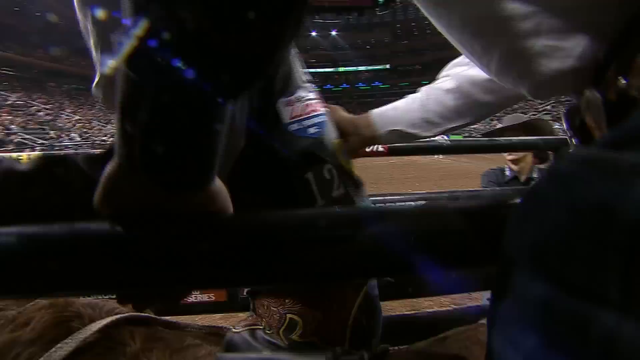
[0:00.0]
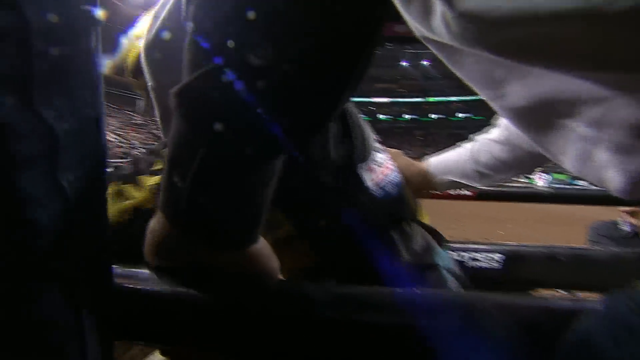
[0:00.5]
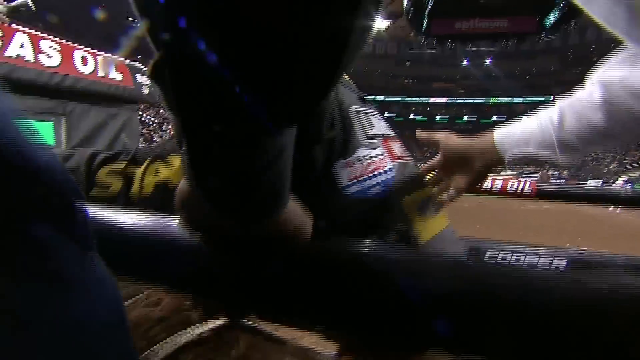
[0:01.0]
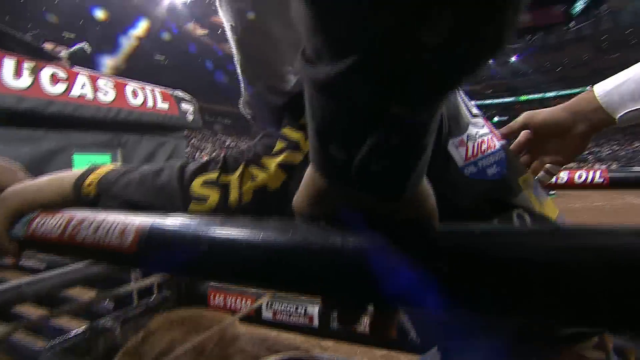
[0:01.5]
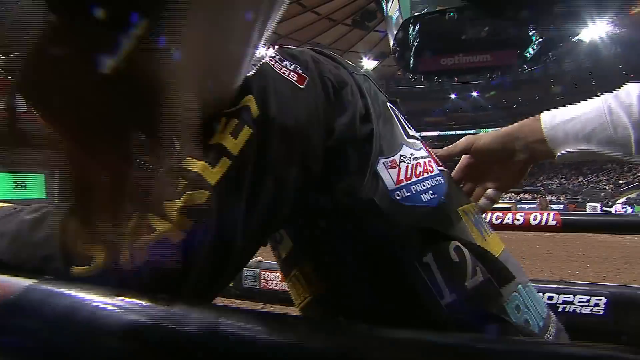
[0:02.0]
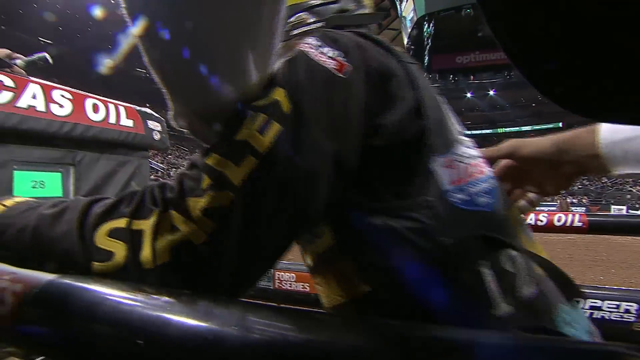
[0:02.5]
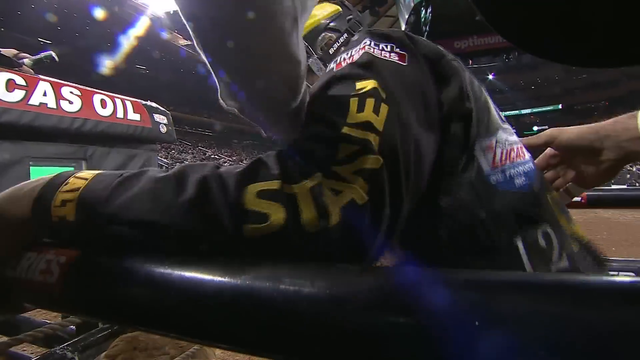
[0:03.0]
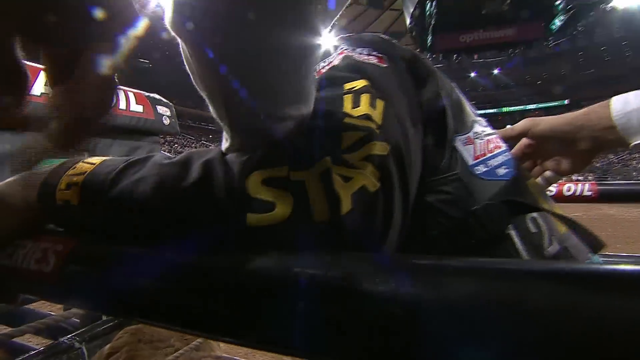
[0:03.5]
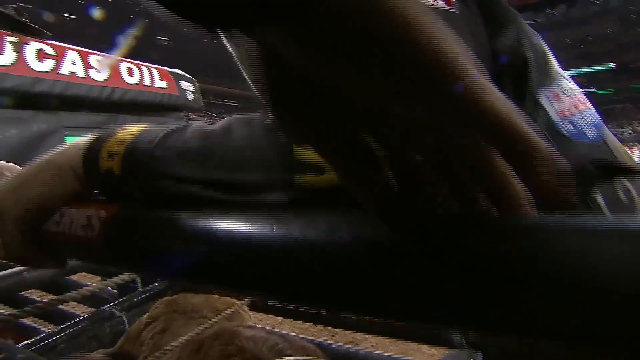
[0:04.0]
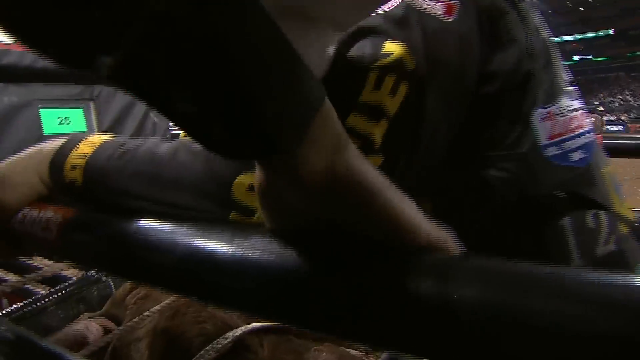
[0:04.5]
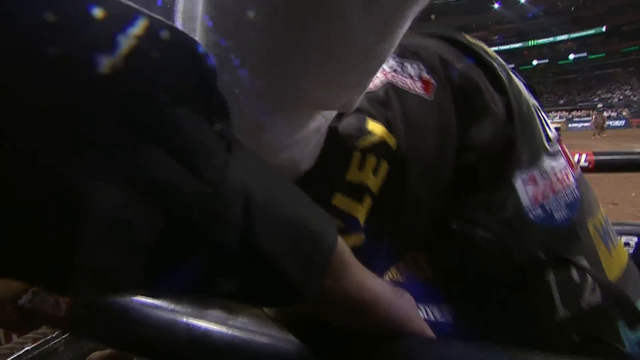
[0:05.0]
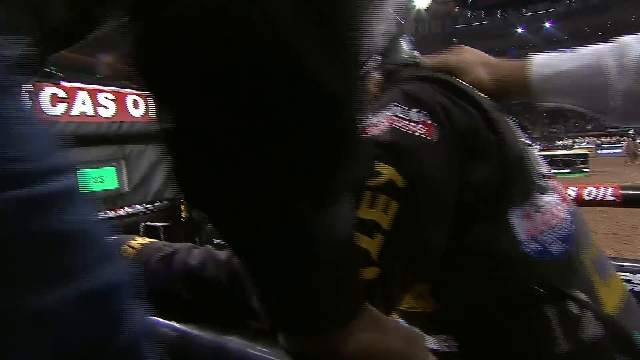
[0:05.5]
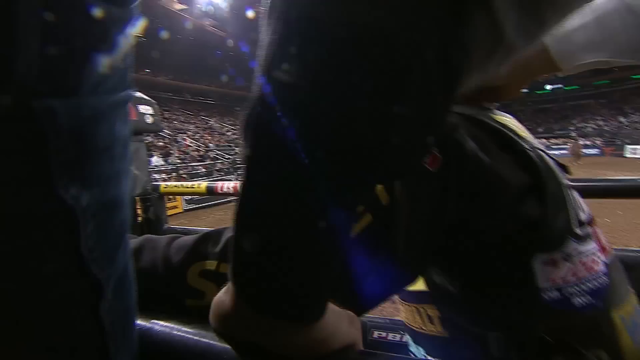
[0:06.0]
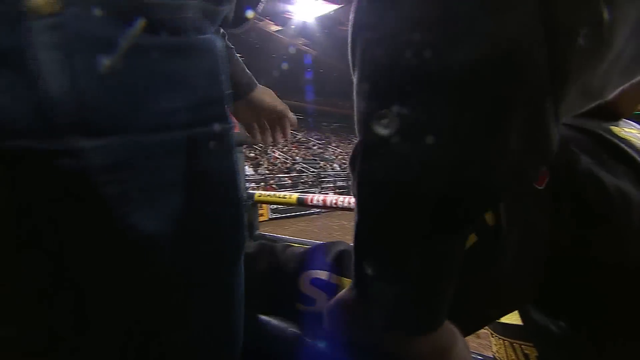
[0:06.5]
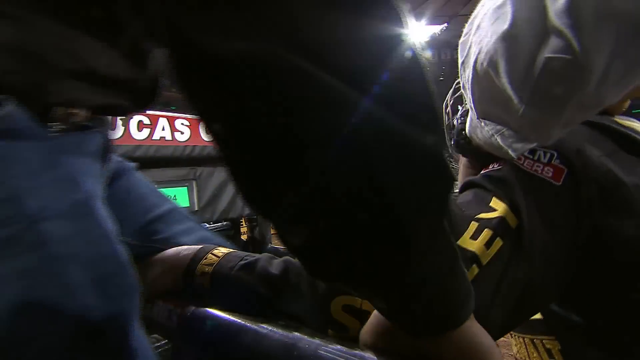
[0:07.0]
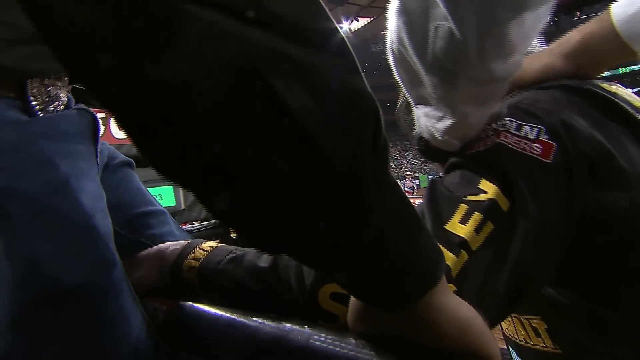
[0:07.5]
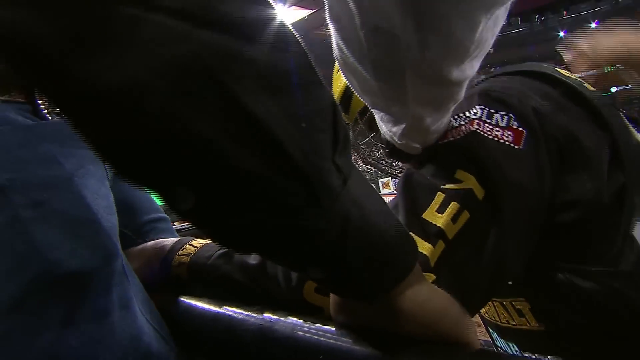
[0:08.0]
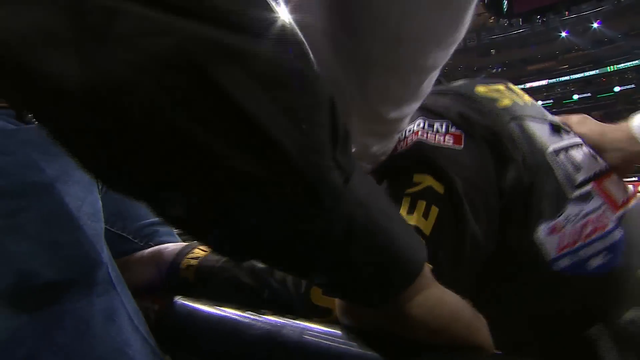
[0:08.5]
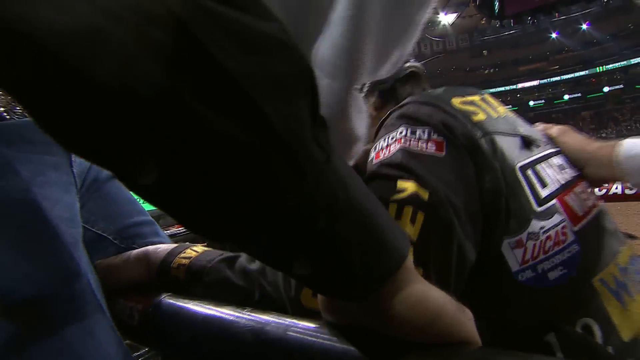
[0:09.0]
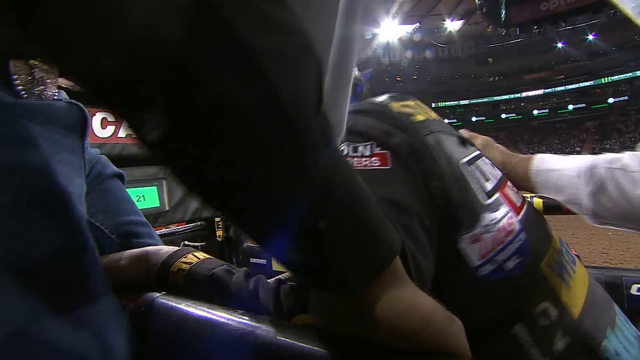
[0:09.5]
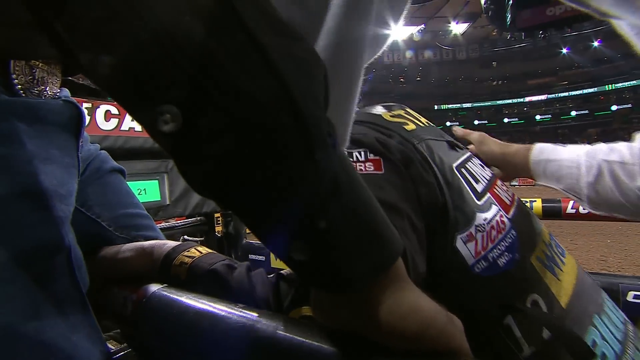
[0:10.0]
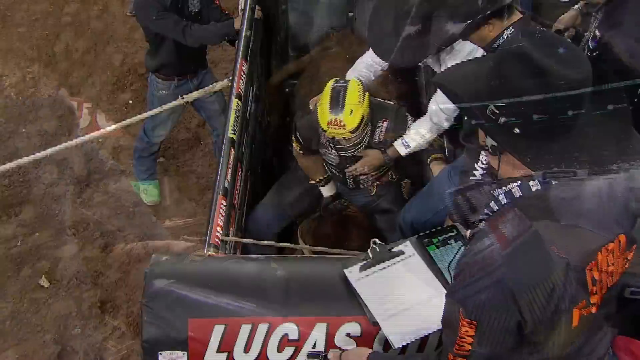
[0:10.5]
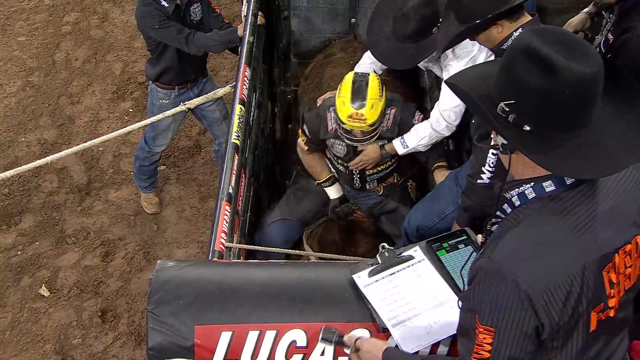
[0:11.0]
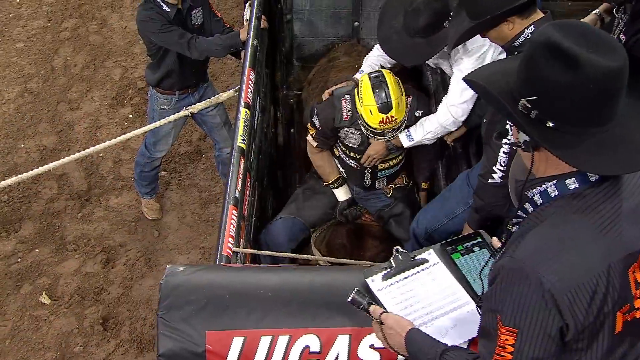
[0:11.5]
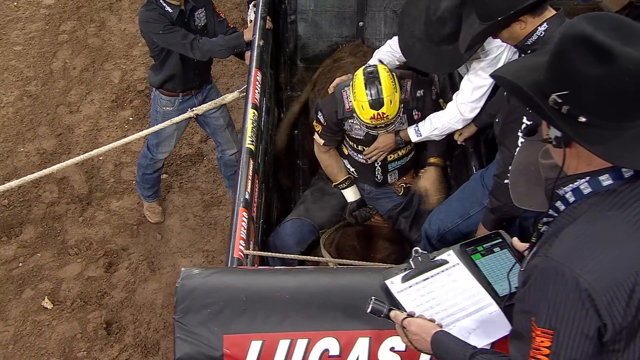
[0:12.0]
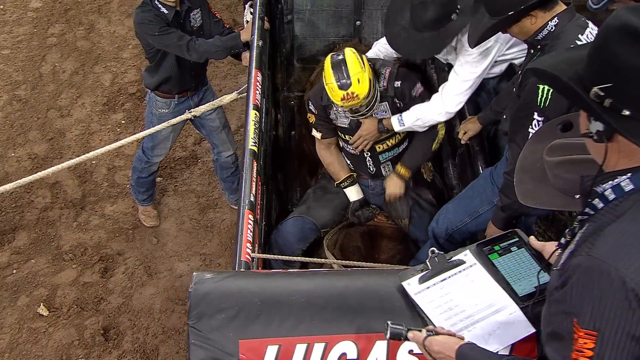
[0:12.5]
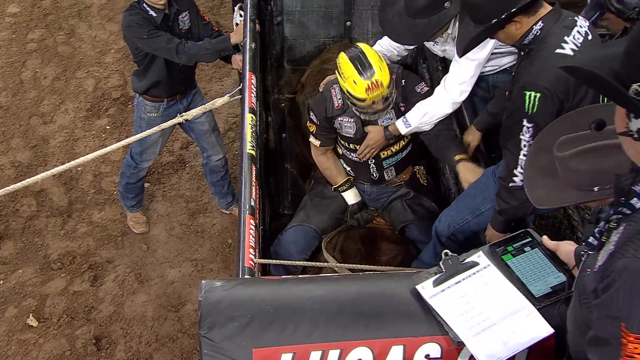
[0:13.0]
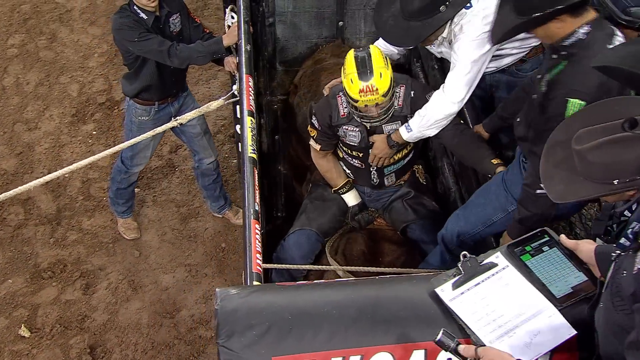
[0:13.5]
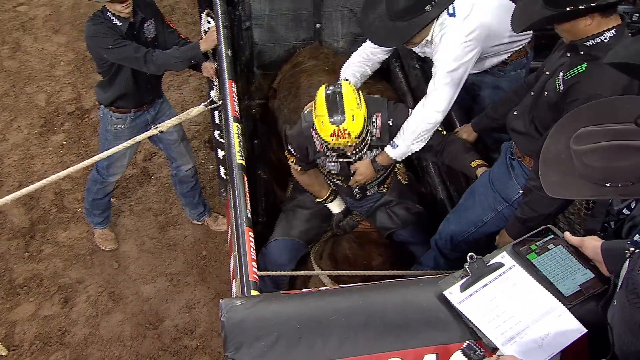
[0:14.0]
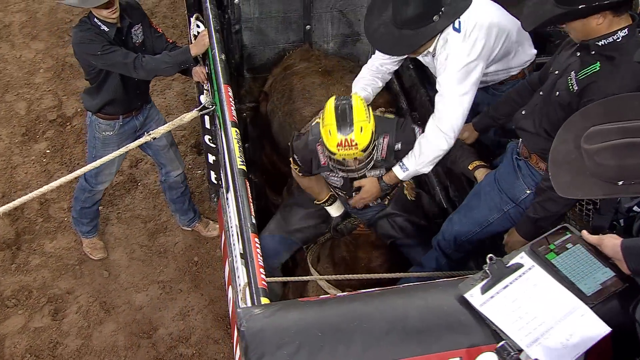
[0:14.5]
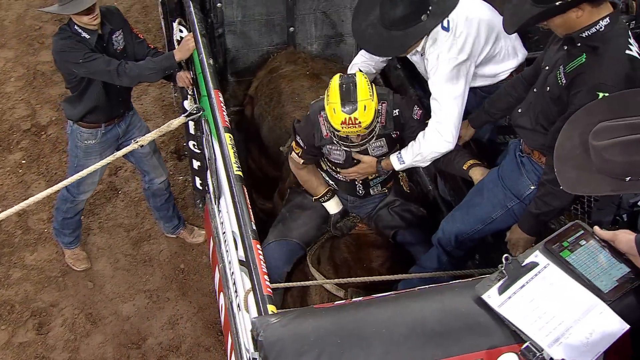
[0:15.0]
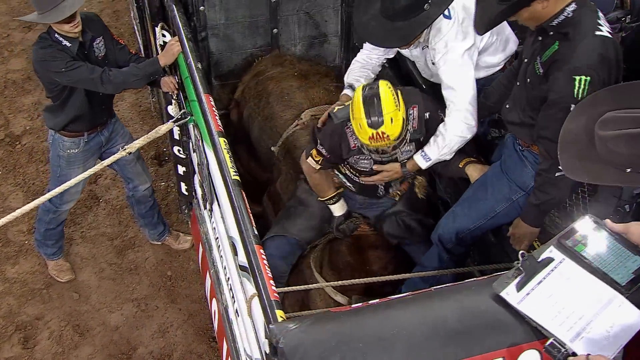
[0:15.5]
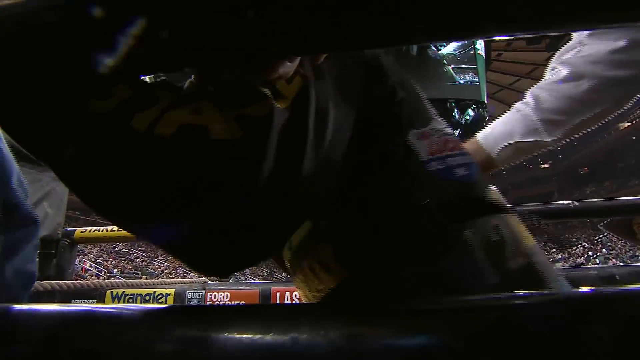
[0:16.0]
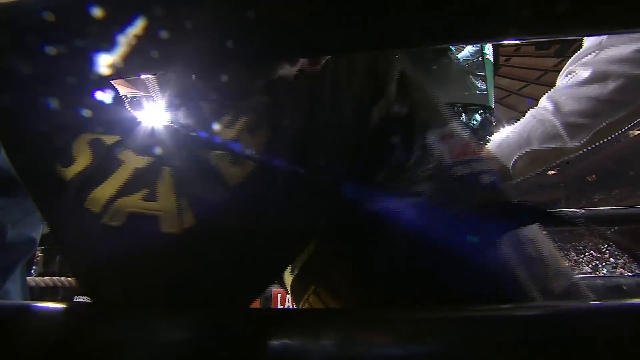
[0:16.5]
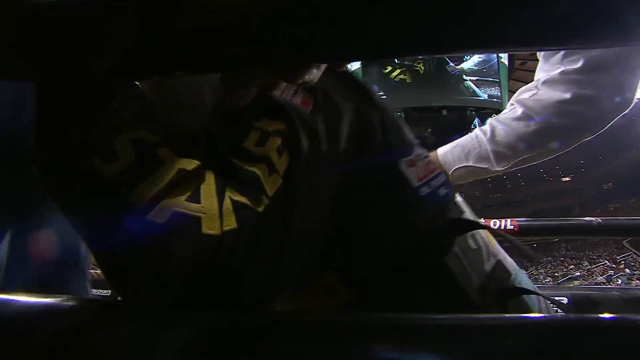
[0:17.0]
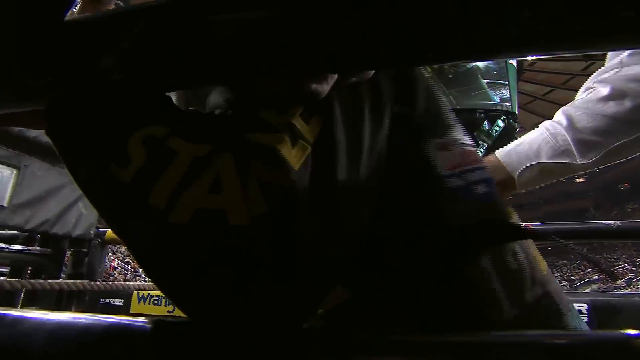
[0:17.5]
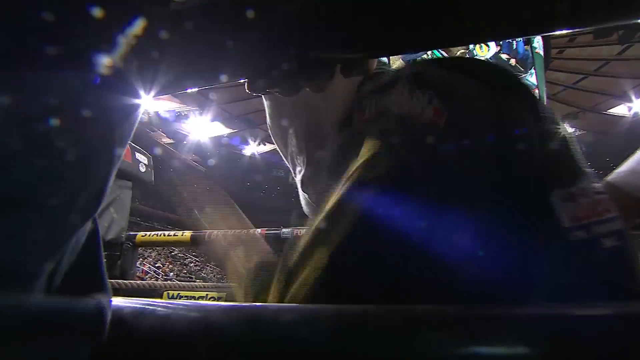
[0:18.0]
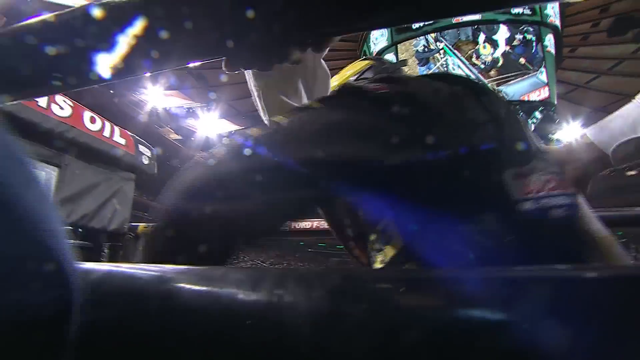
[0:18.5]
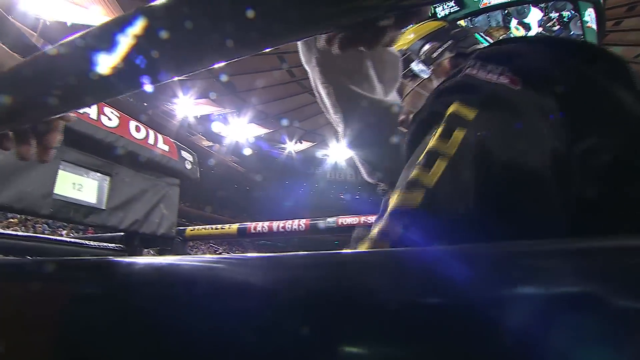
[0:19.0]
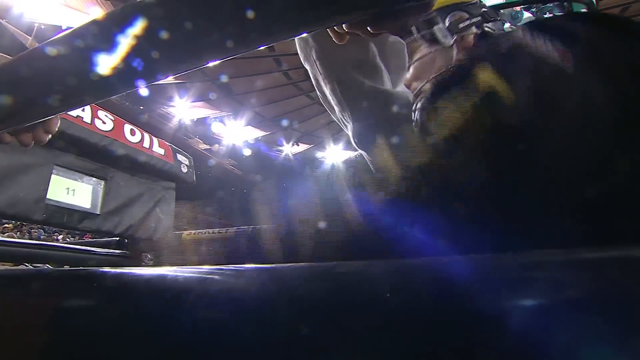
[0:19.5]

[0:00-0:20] A man sits on top of a bull that is confined to a cage, so it is not moving. He wears a glove on one hand to hold the reins, while his other hand is bare. He also wears a bright yellow helmet with face guards and a black jersey-type shirt; the shirt has a long sleeve on only one arm, while the other arm is short-sleeved. Multiple people help him prepare and assist him in seating himself properly on the bull. In the background the setting is a stadium, with fans in the stands and lights on the stadium rooftop.